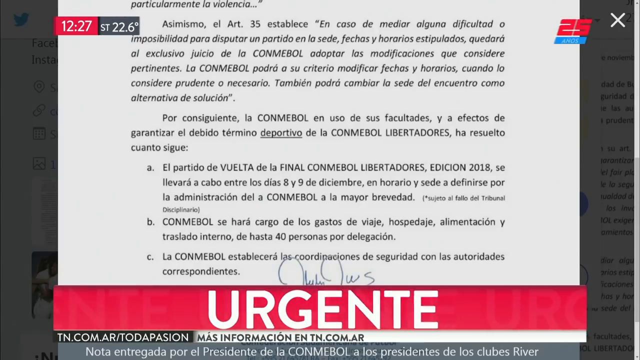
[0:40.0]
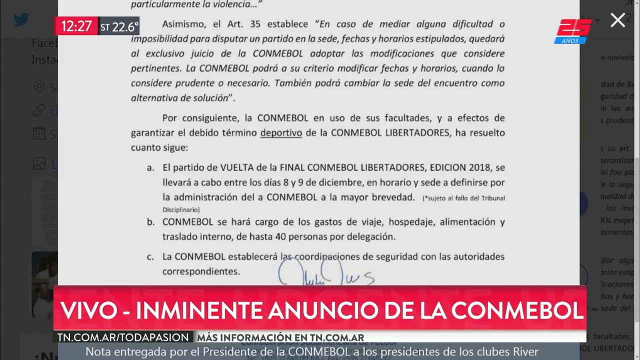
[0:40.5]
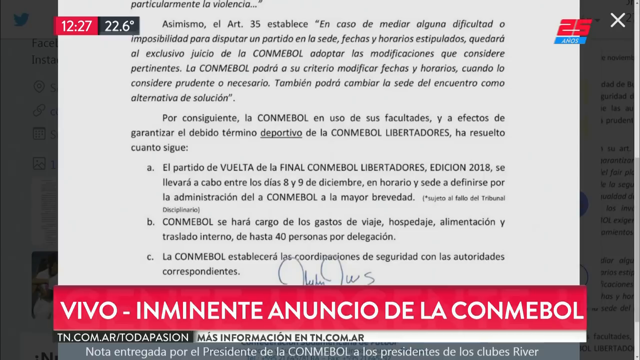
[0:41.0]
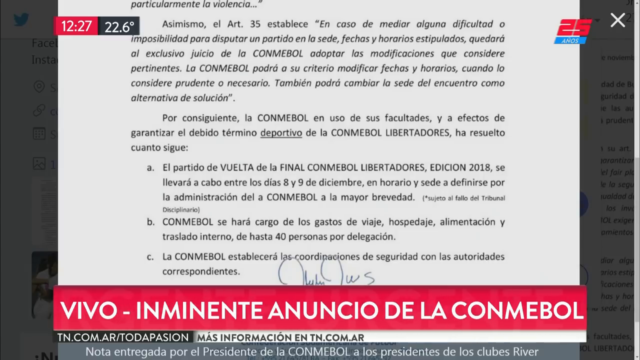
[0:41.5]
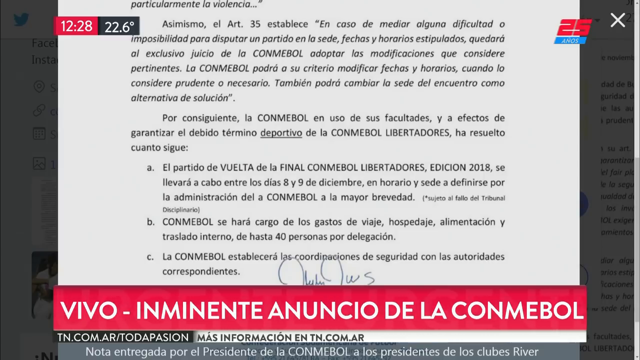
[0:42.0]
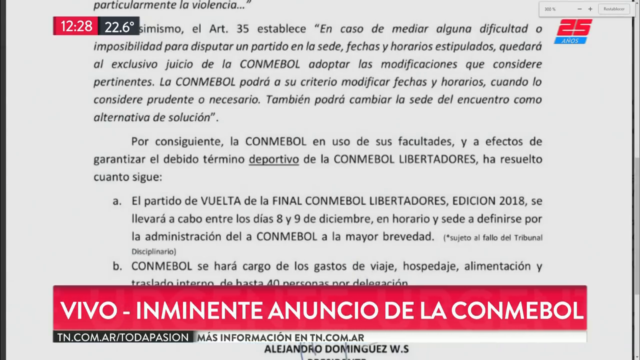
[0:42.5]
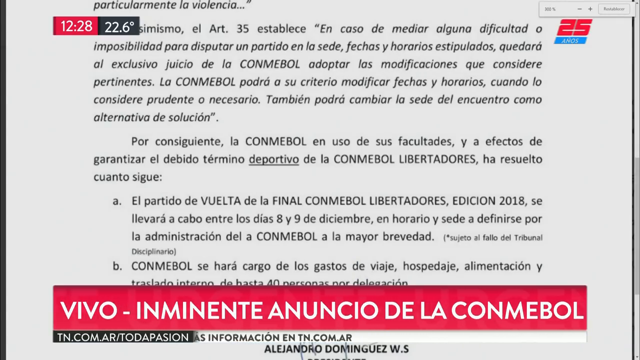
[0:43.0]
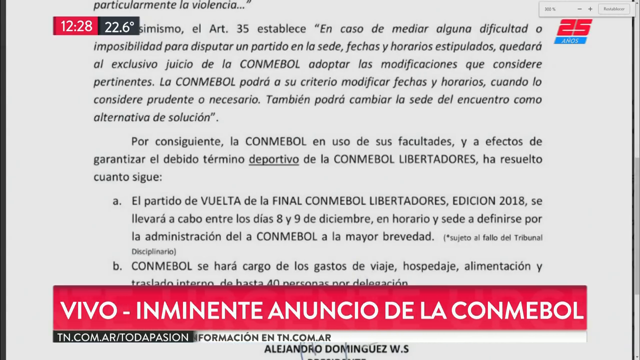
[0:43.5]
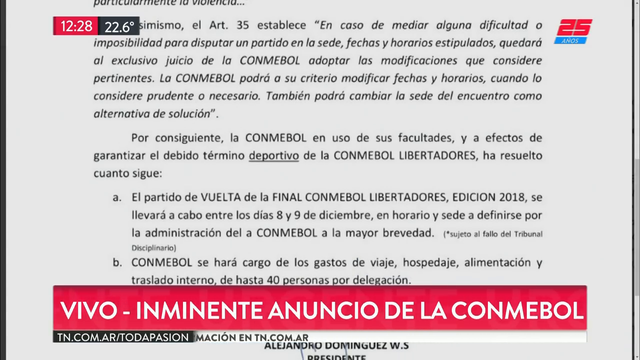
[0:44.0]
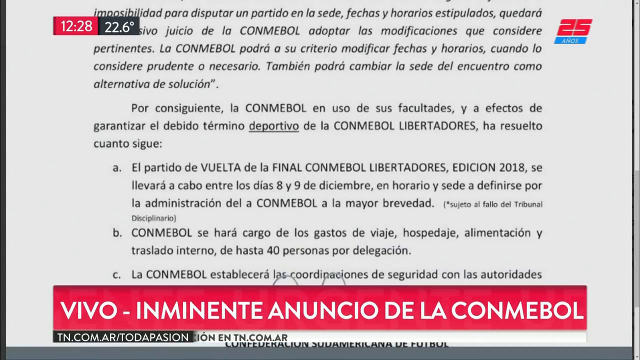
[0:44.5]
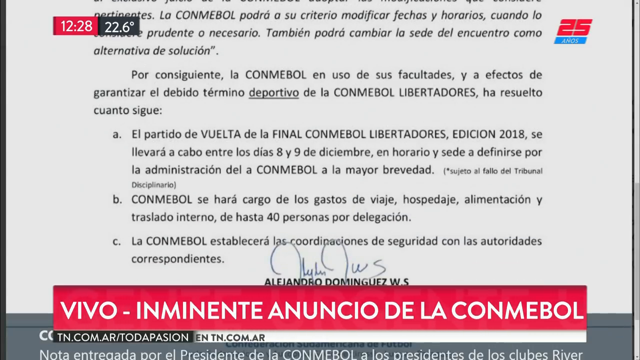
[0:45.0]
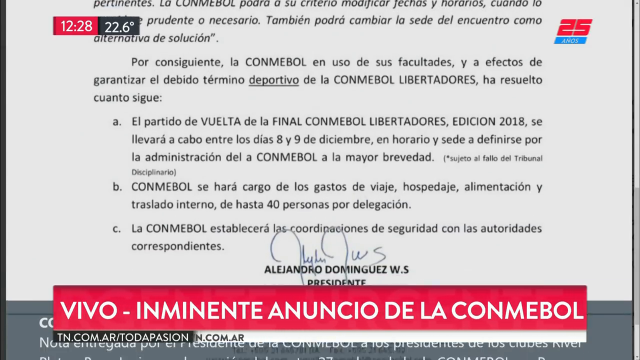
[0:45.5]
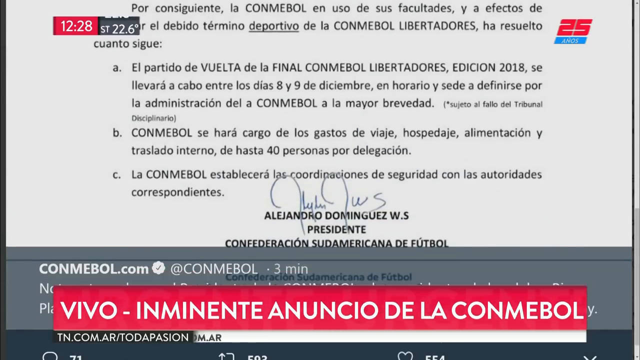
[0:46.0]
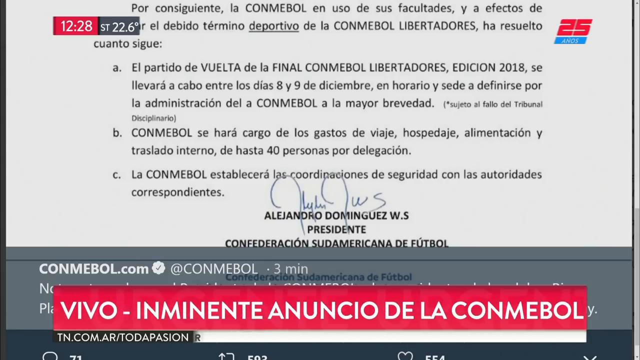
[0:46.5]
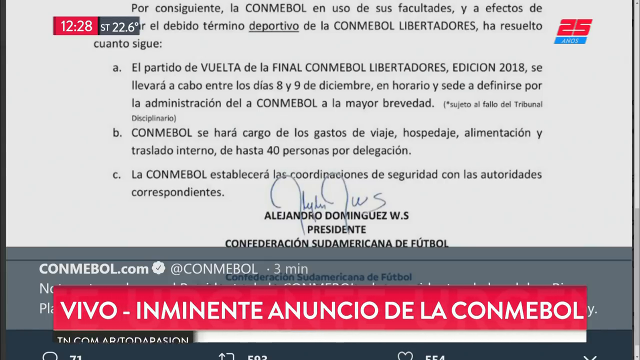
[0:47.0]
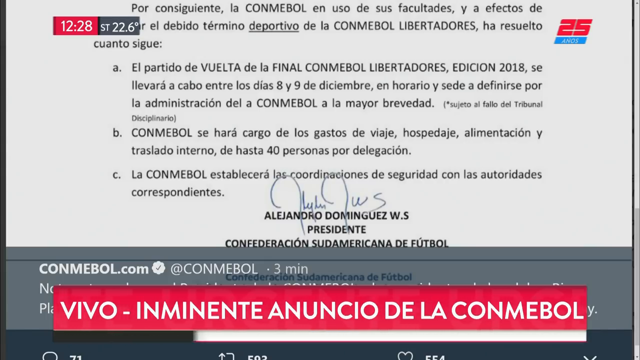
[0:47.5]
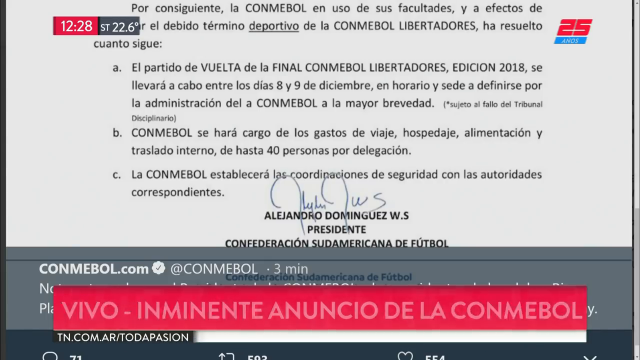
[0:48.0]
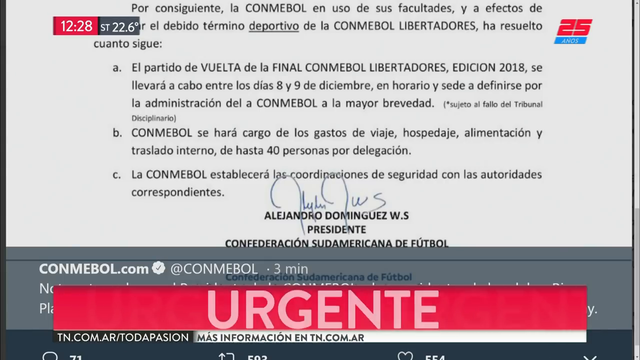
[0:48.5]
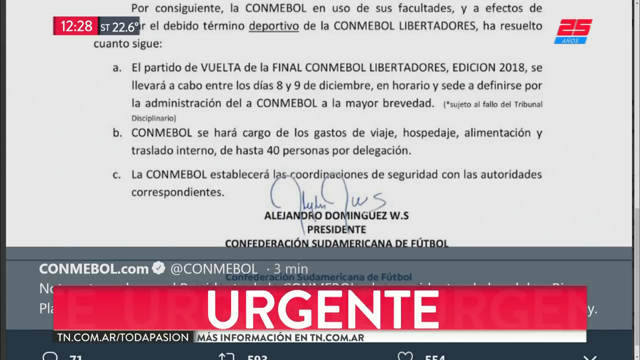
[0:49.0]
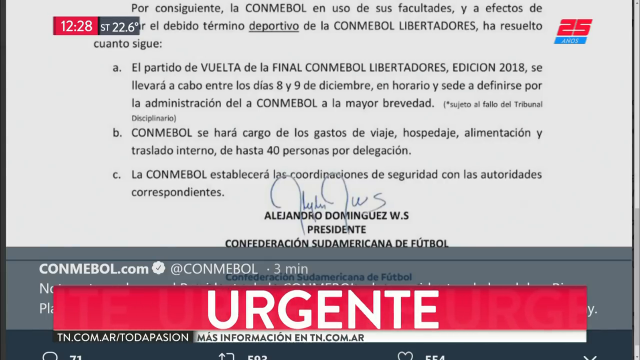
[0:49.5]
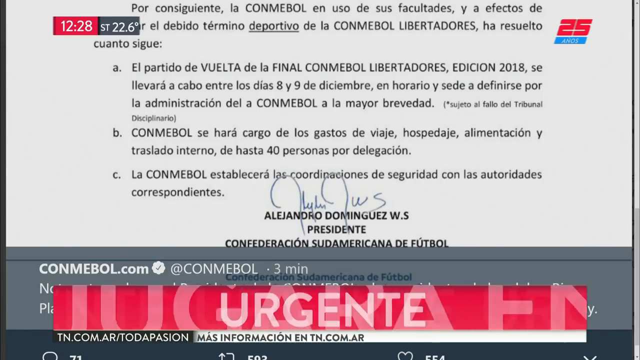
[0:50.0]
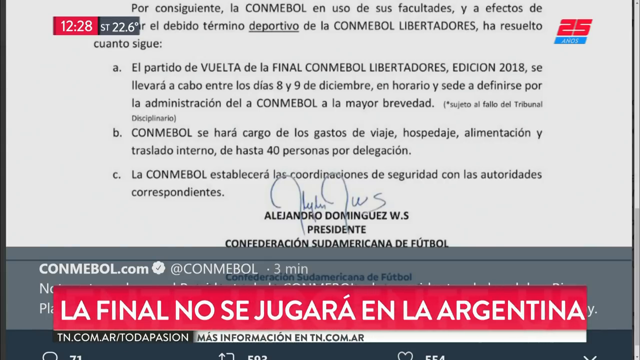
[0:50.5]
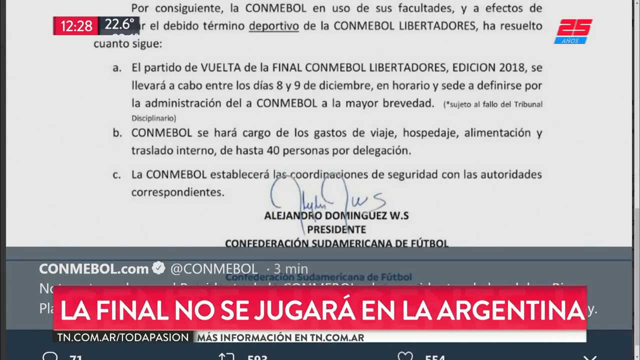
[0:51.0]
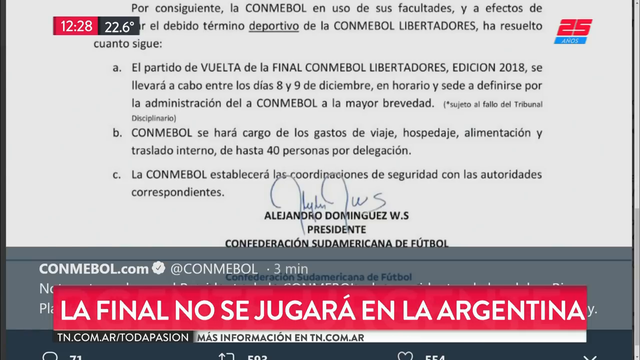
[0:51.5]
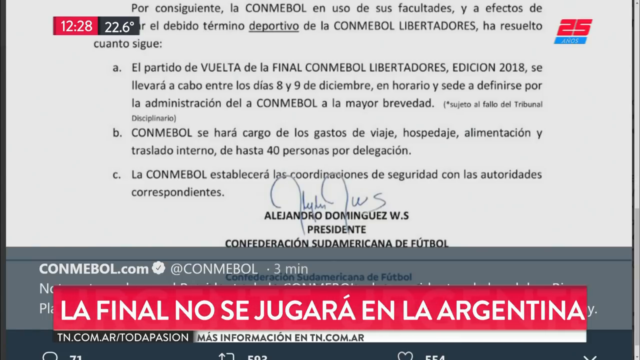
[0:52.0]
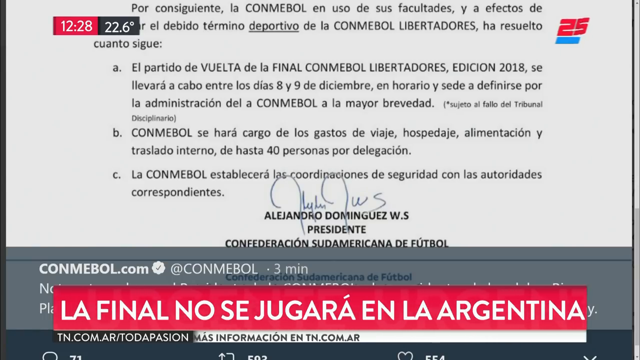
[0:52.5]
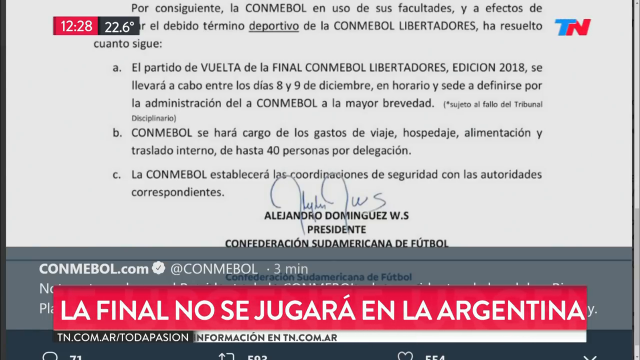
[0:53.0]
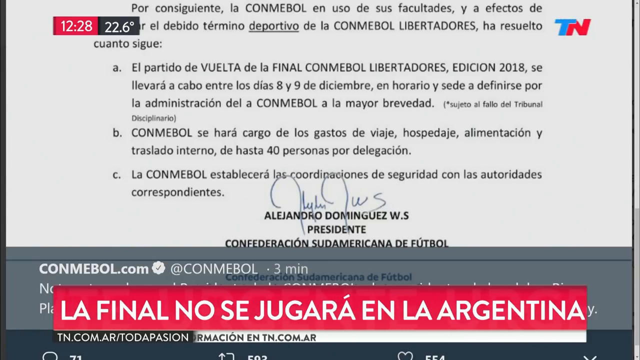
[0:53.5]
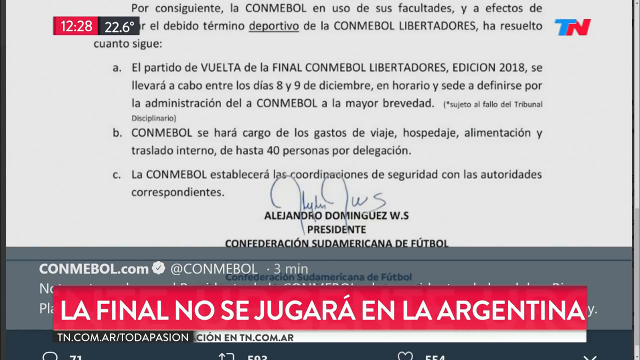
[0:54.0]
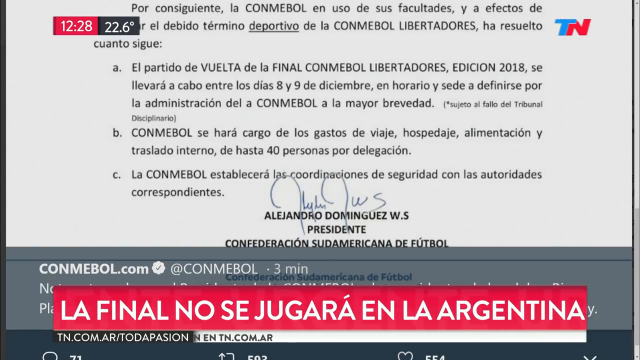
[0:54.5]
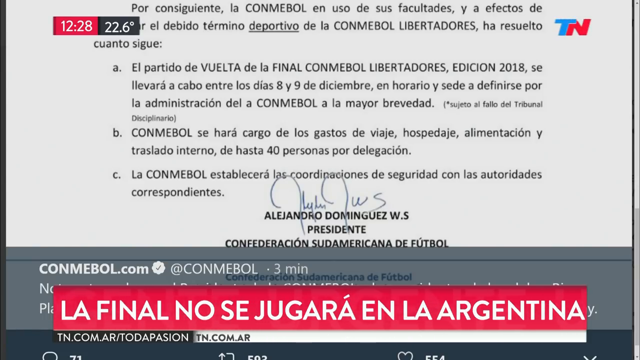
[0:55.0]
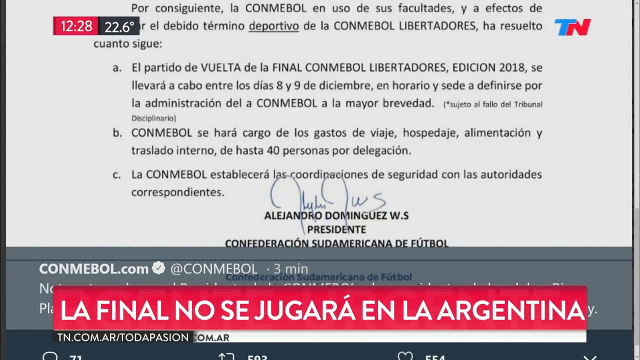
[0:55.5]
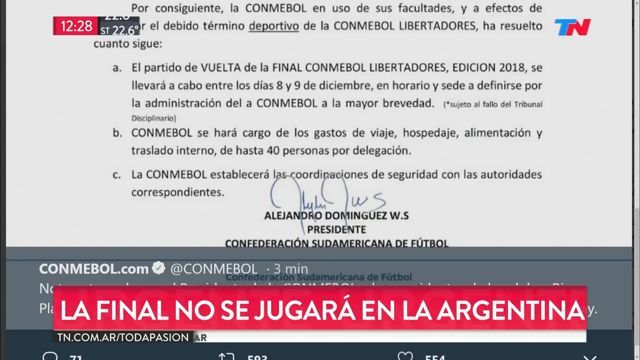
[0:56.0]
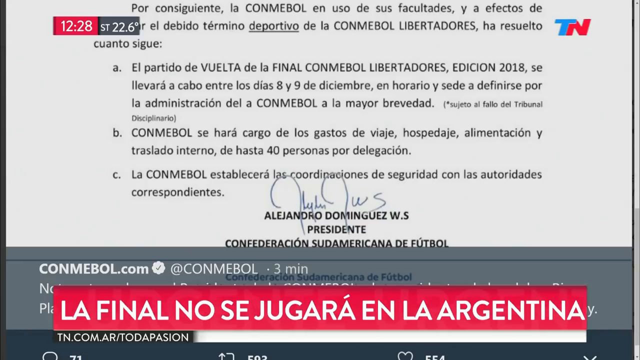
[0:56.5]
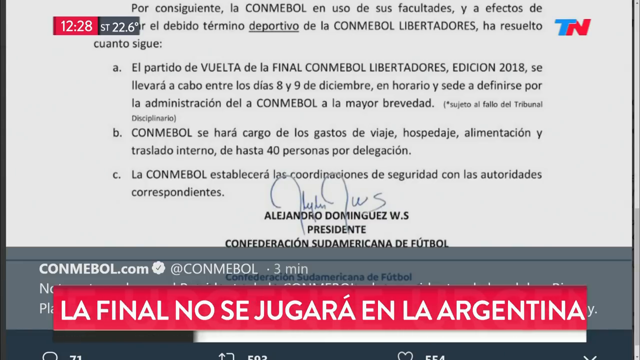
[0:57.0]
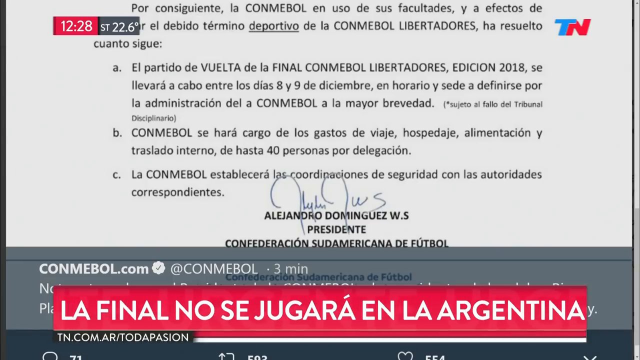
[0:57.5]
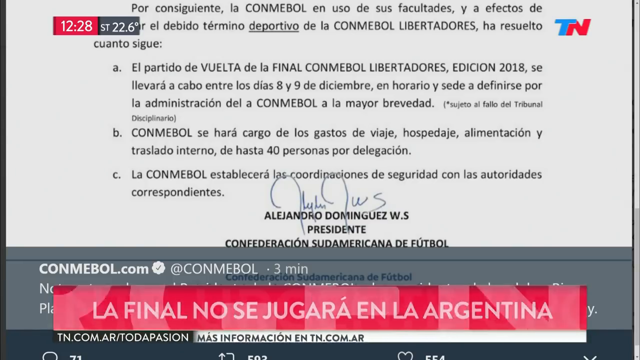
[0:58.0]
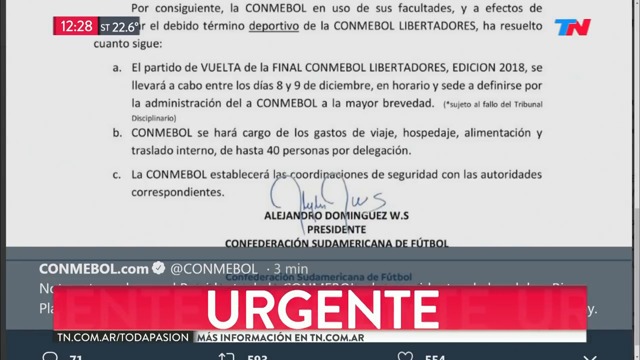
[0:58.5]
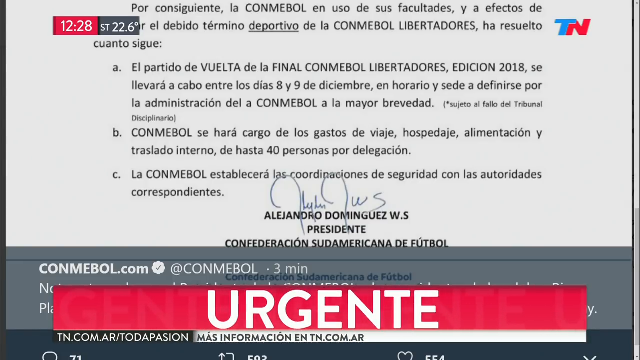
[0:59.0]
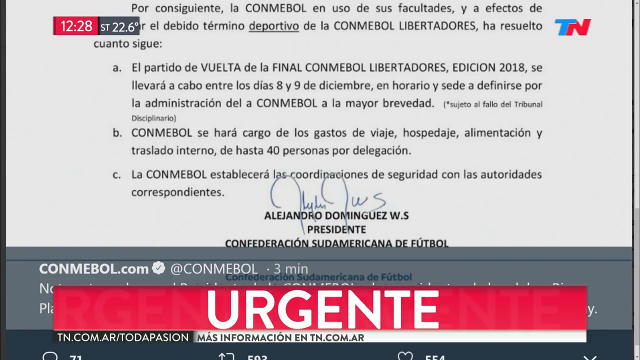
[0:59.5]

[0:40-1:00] What appears to be a document in a foreign language is shown, with a signature toward the bottom and a red banner taking up a big portion of the bottom of the screen. The view briefly zooms in on the document so it becomes more full page, then scrolls down to reveal more of the signature toward the bottom, and goes down further to what apparently says "President", staying there. A red banner pops up at the bottom reading "URGENTE", then flashes to more text; the text at the very bottom keeps changing, apparently as headlines of urgent news being continuously updated.